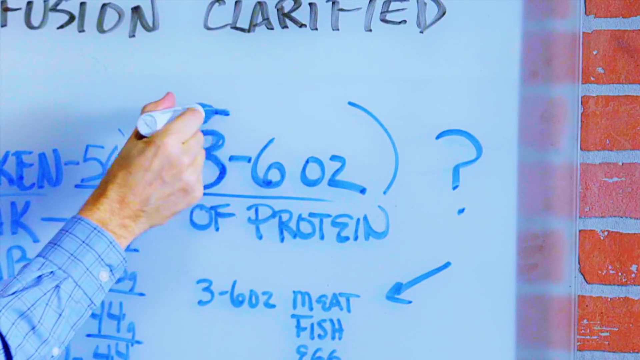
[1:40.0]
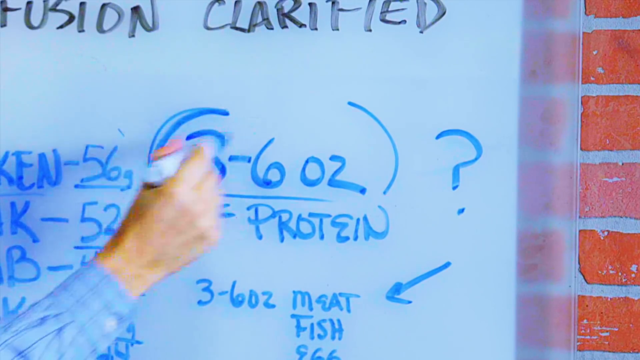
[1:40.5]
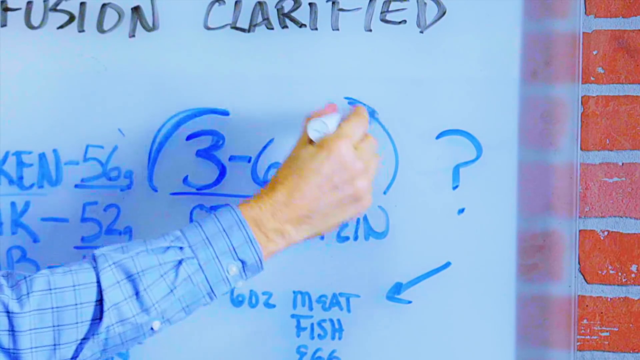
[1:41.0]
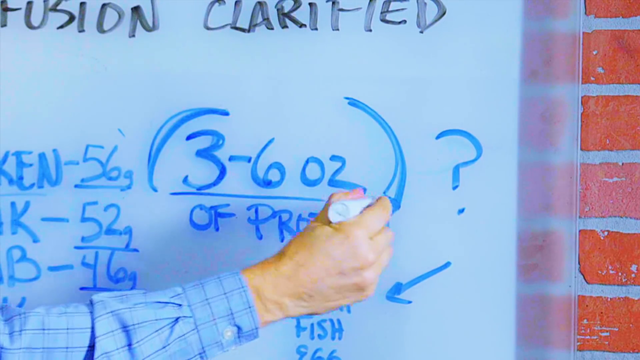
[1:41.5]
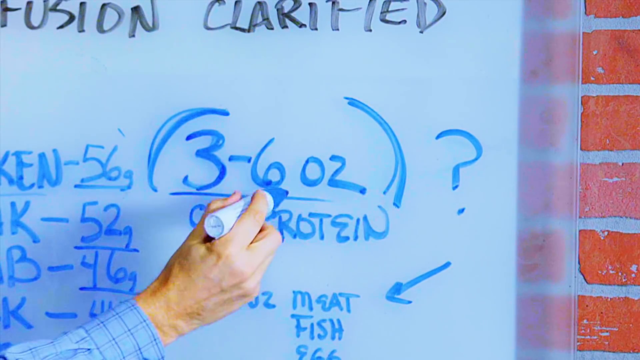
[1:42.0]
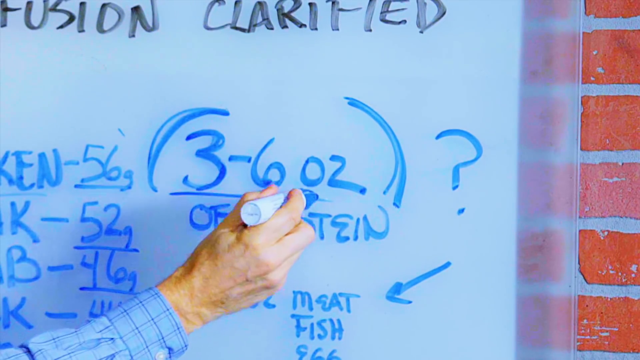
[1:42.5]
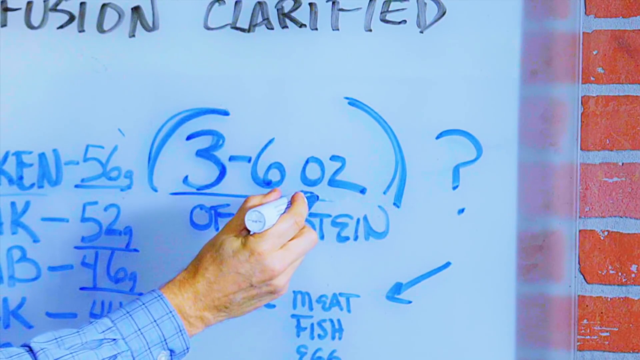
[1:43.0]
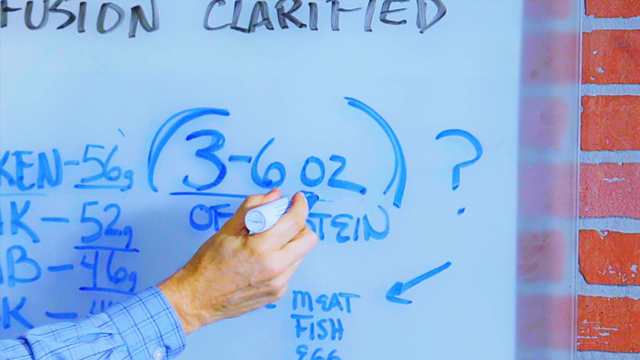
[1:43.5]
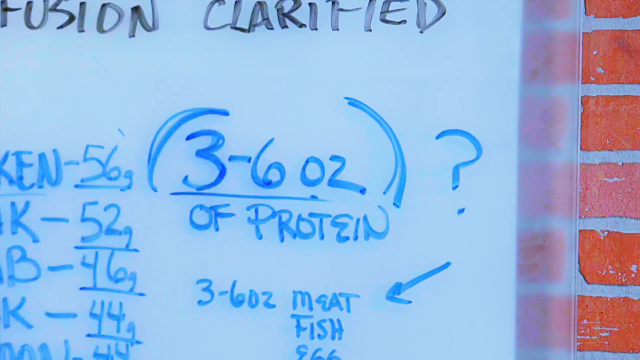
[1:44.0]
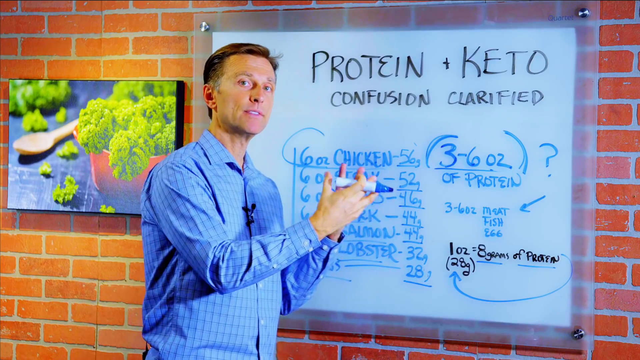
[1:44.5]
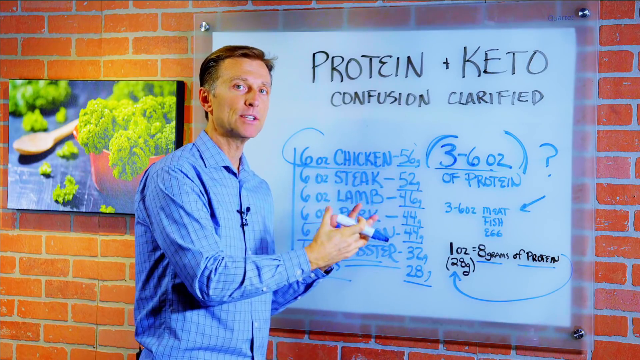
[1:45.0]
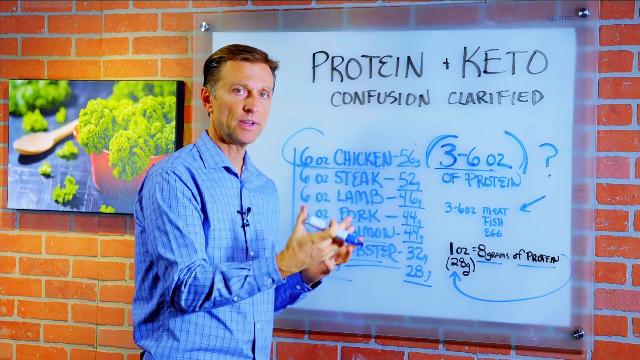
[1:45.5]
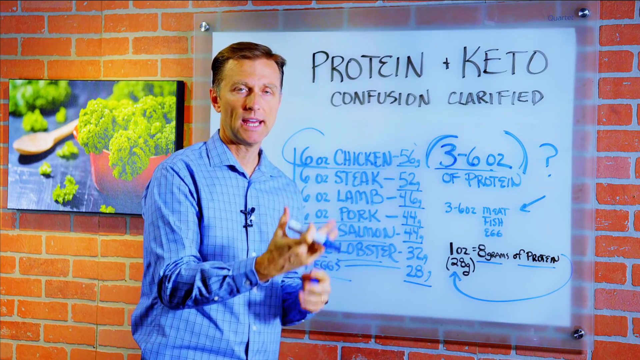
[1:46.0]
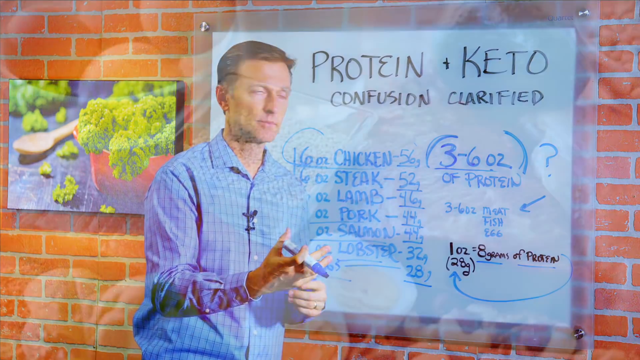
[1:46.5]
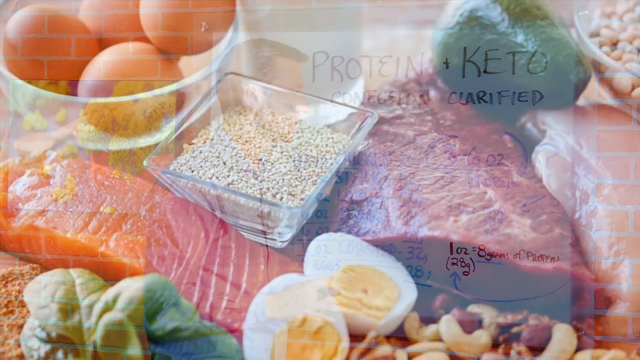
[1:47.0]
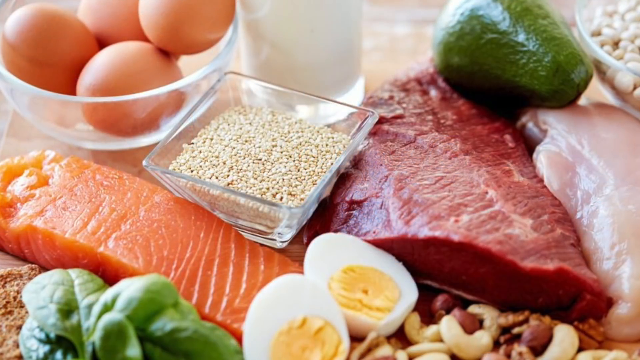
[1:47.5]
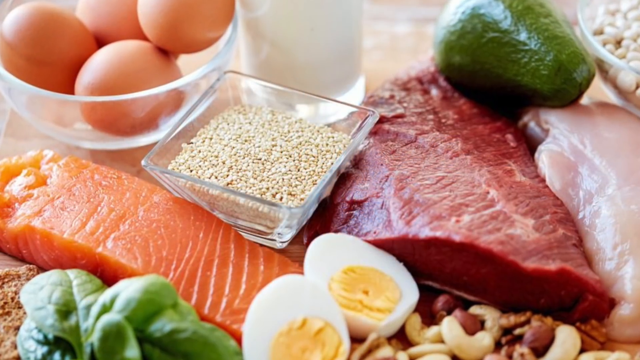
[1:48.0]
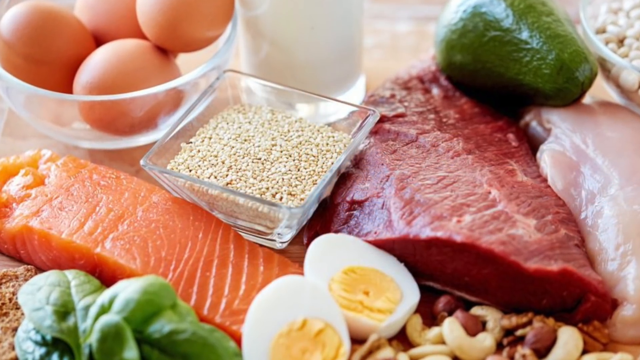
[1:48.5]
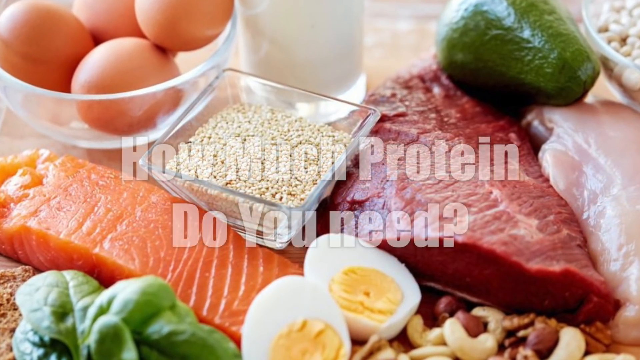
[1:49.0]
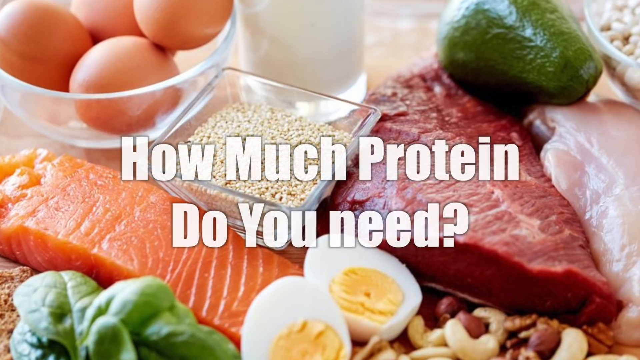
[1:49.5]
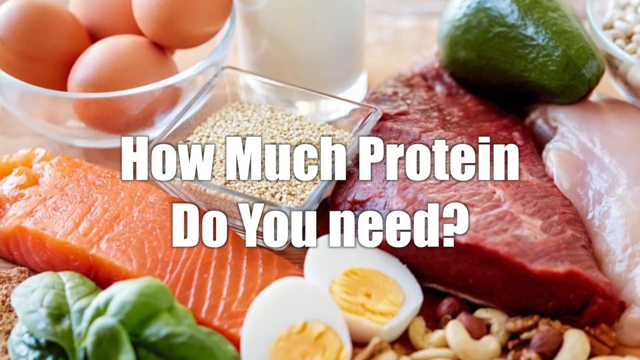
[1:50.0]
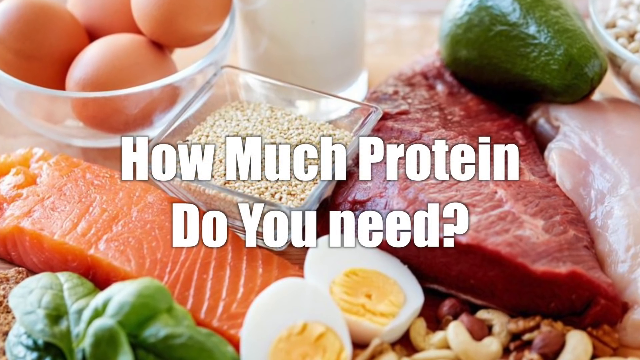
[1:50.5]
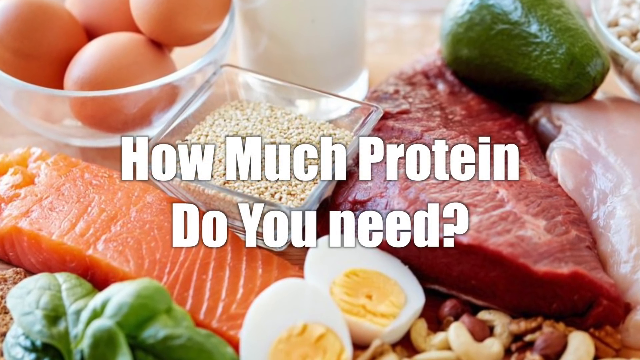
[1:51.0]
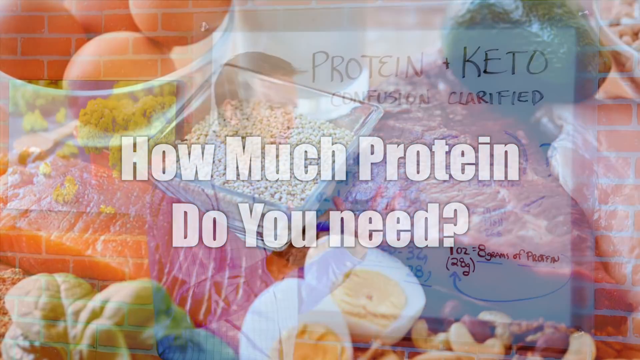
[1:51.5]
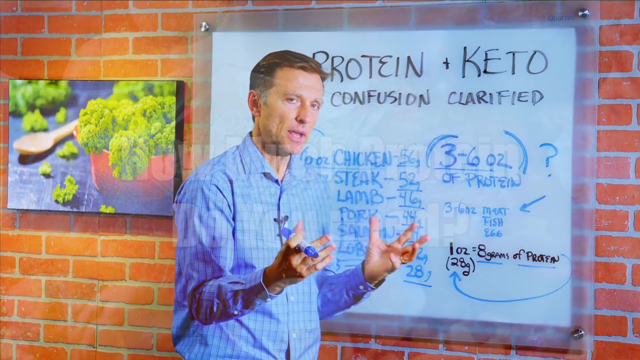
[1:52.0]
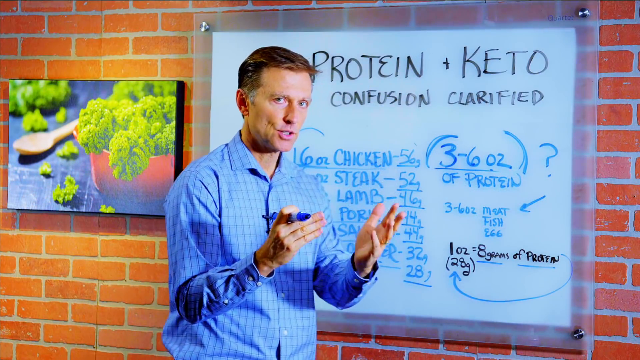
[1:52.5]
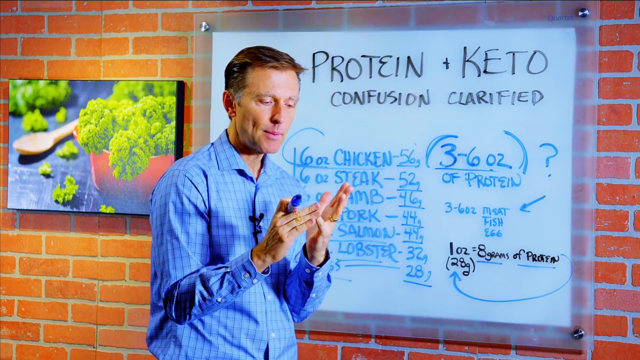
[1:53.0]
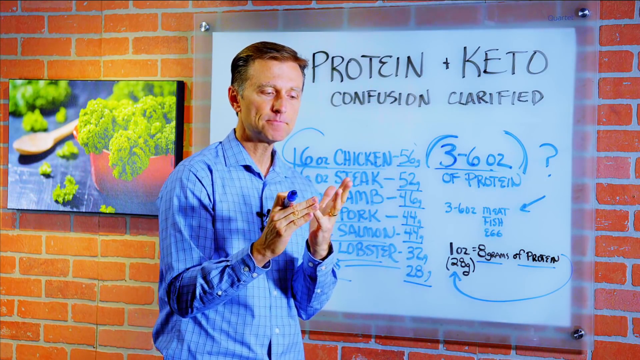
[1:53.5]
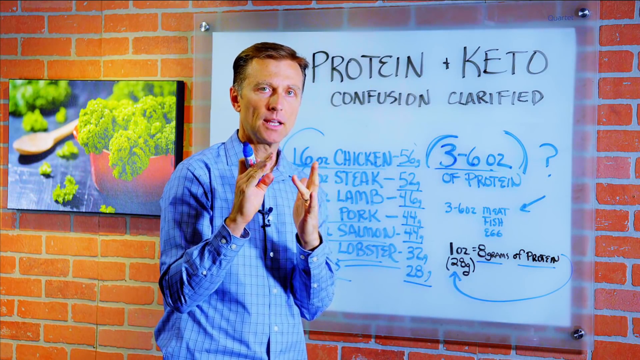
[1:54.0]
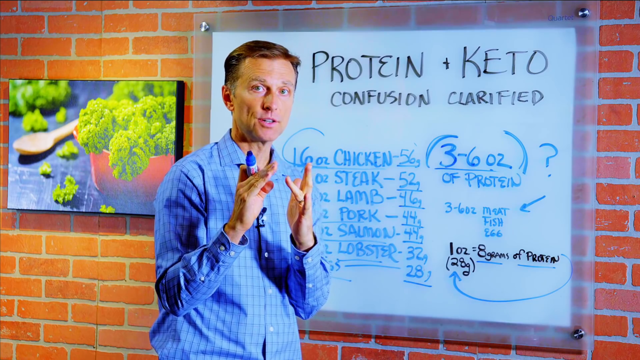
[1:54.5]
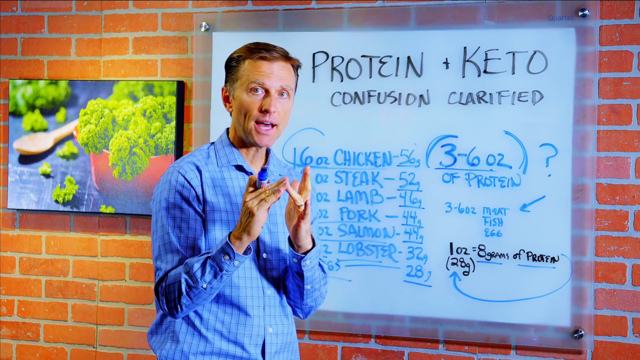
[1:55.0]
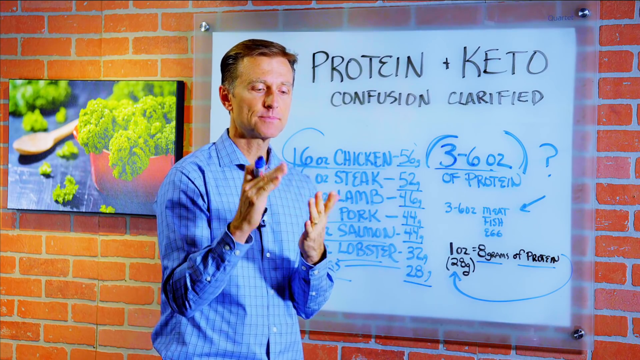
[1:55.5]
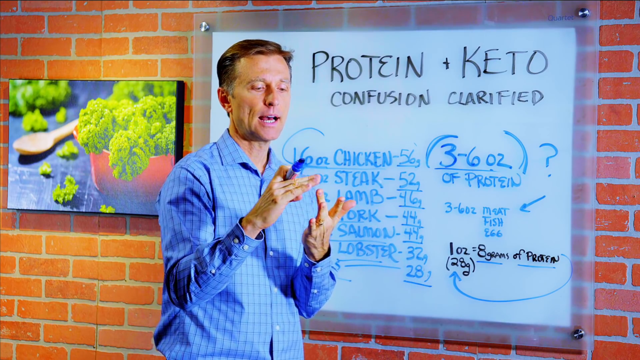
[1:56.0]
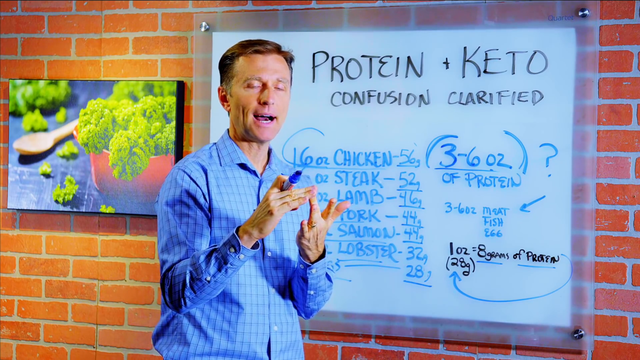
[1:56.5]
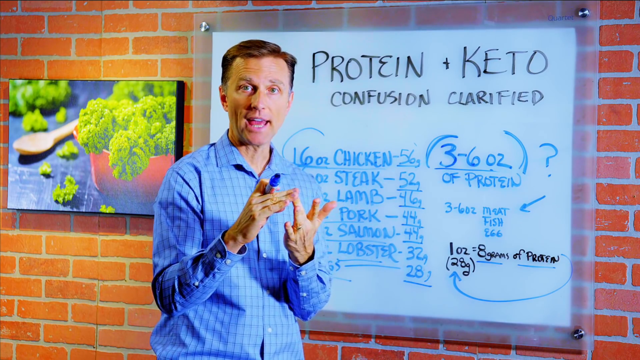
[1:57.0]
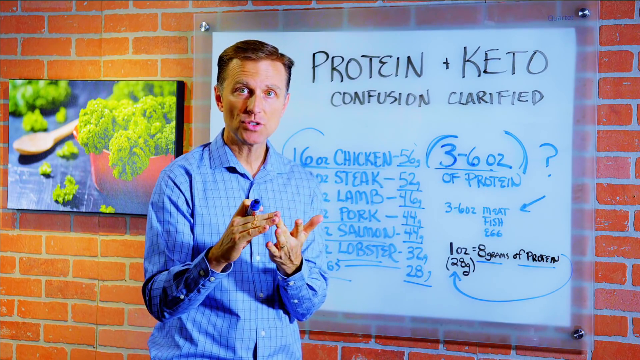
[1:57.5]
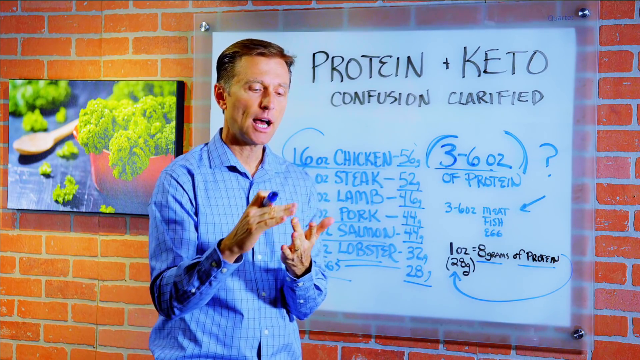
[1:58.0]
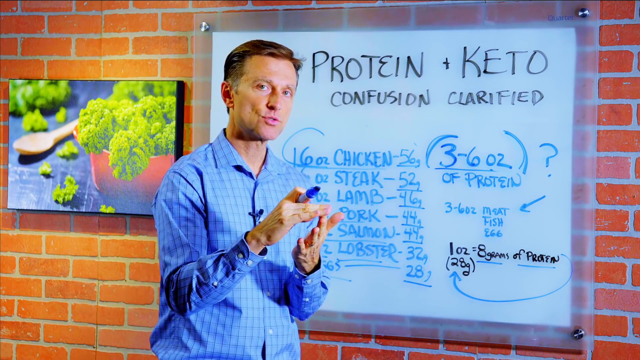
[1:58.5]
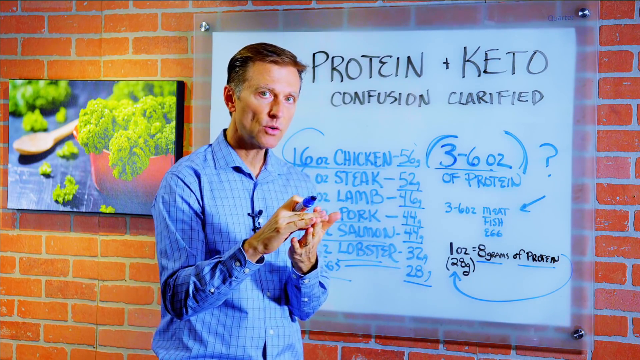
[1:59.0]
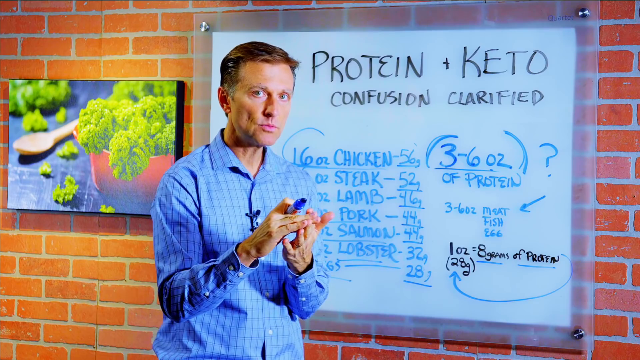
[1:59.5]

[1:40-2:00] The screen fades out from the man in the blue shirt at the chalkboard to a title screen that says "How much protein do you need?". The title screen features leafy greens, salmon, eggs including boiled and raw eggs, meats, some grain, various green vegetables and other protein-rich foods. It then transitions back to the man at the chalkboard, who emphasizes the parentheses around "three to six ounces". He counts off various points on his fingertips while still holding the open blue marker, then underlines "six ounces" on the chalkboard. He speaks facing the camera rather than the board. The video then goes to a close-up of his hand underlining "six ounces" with blue marker on the right side of the screen.